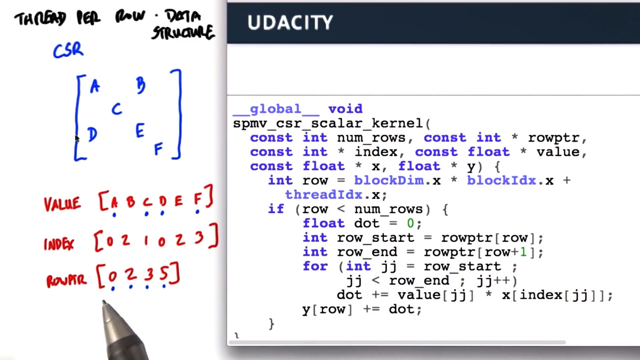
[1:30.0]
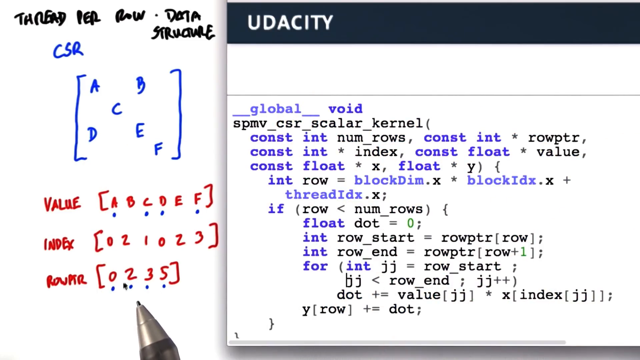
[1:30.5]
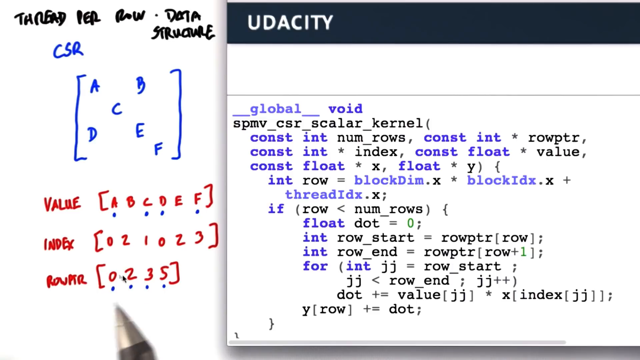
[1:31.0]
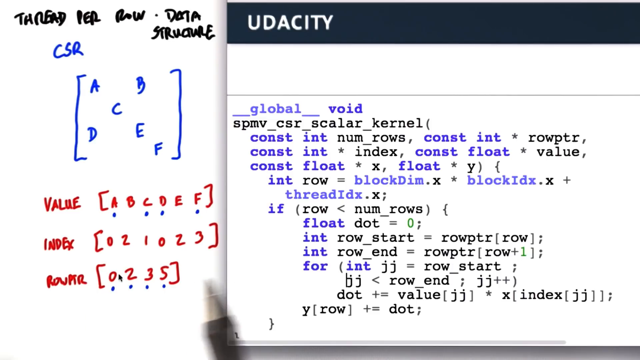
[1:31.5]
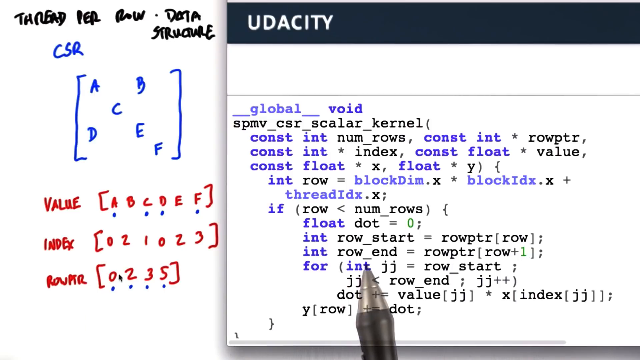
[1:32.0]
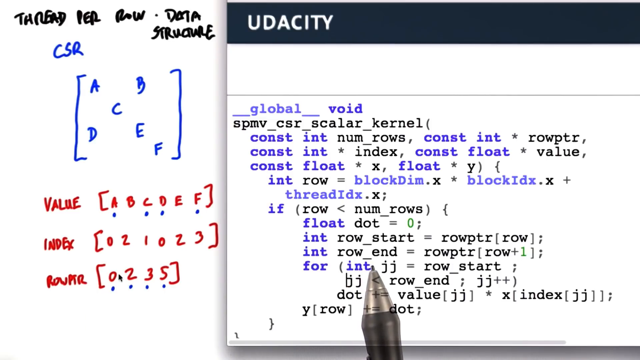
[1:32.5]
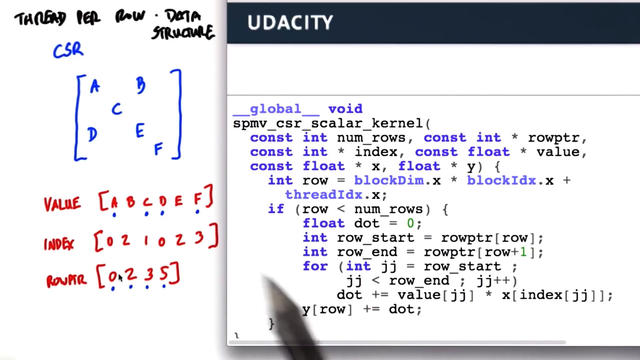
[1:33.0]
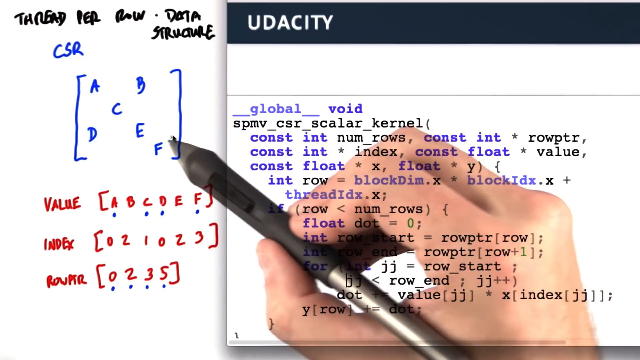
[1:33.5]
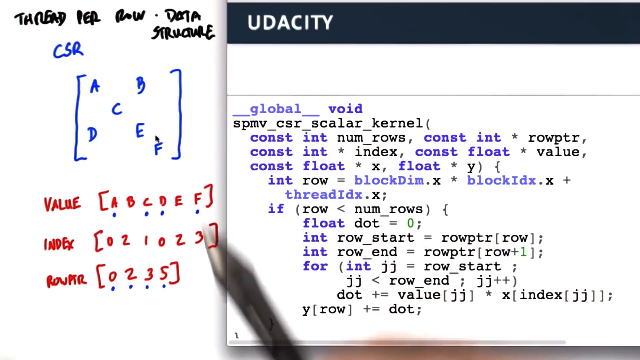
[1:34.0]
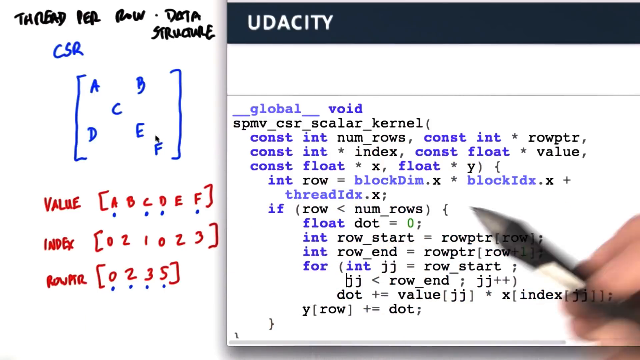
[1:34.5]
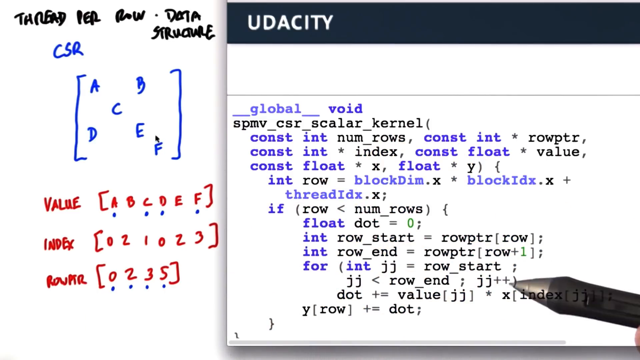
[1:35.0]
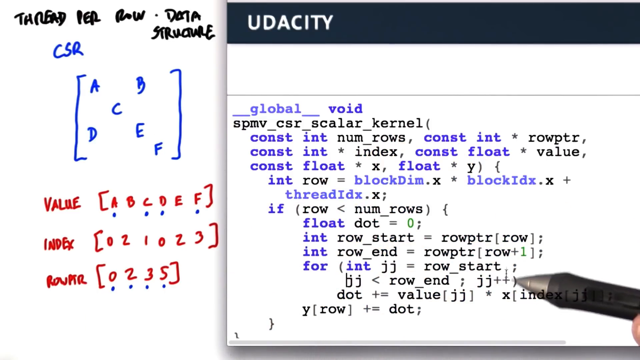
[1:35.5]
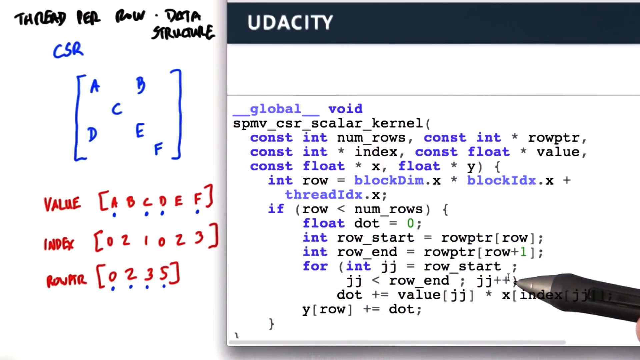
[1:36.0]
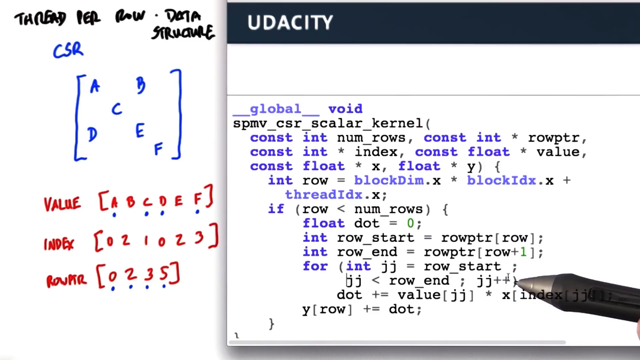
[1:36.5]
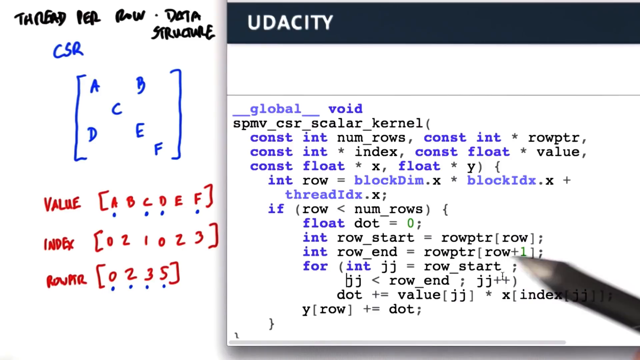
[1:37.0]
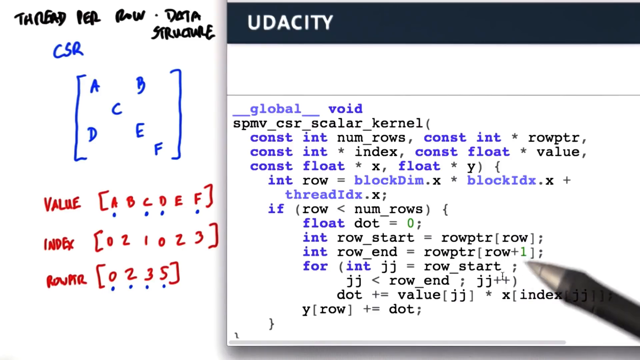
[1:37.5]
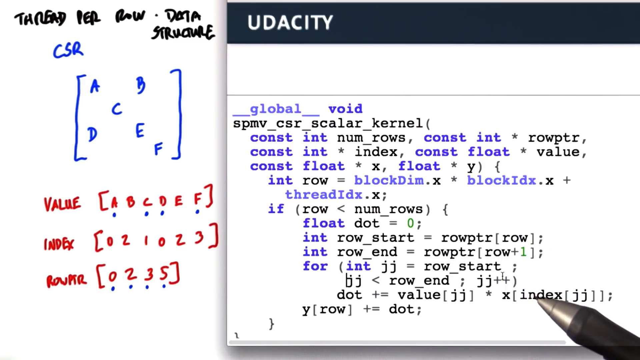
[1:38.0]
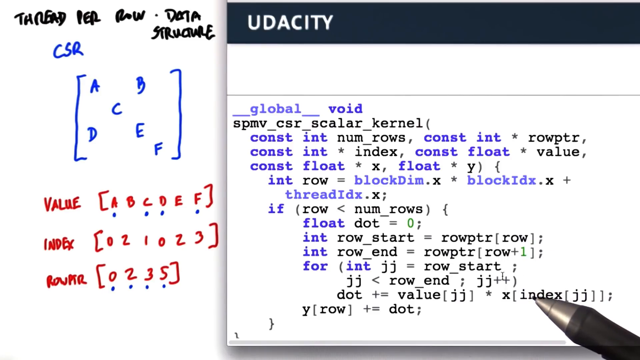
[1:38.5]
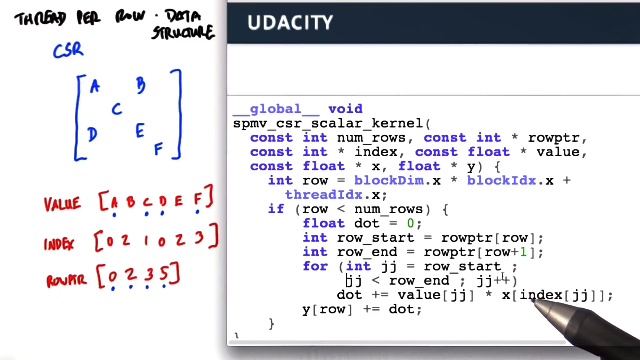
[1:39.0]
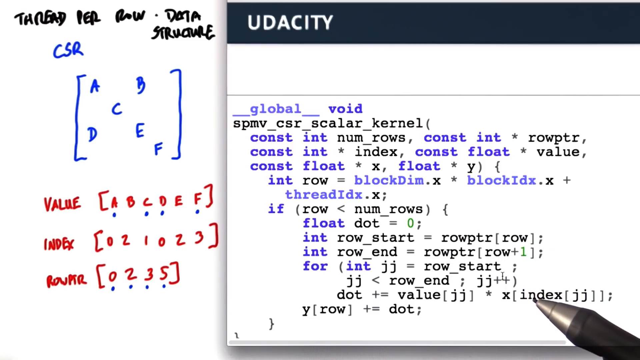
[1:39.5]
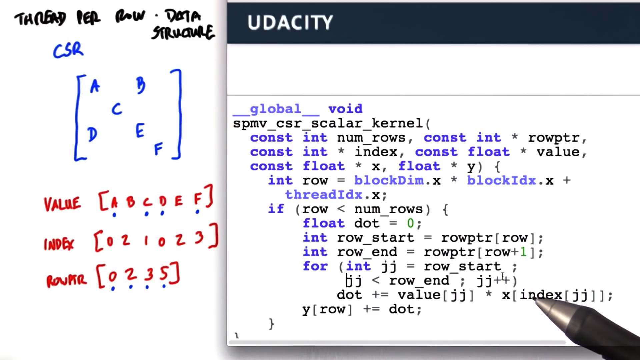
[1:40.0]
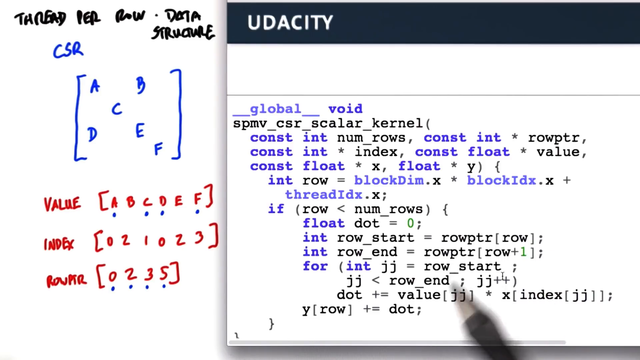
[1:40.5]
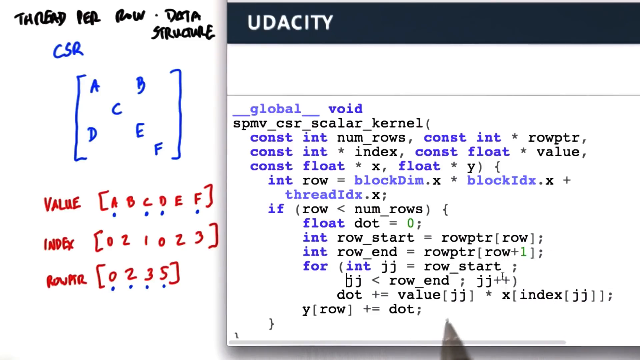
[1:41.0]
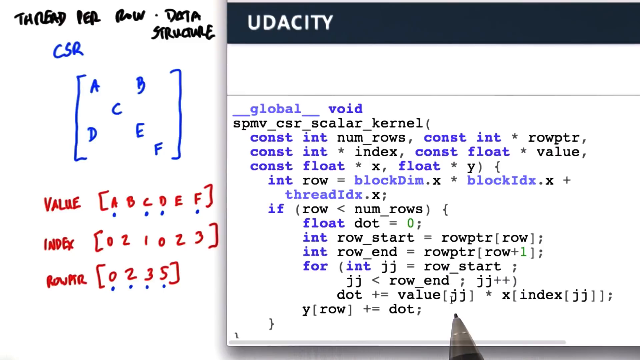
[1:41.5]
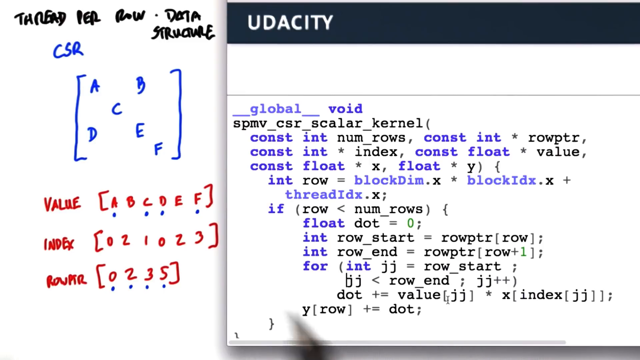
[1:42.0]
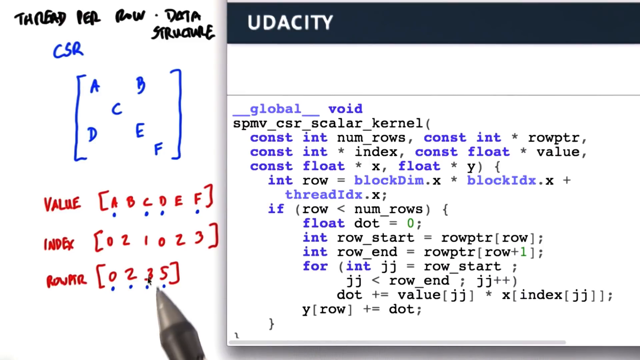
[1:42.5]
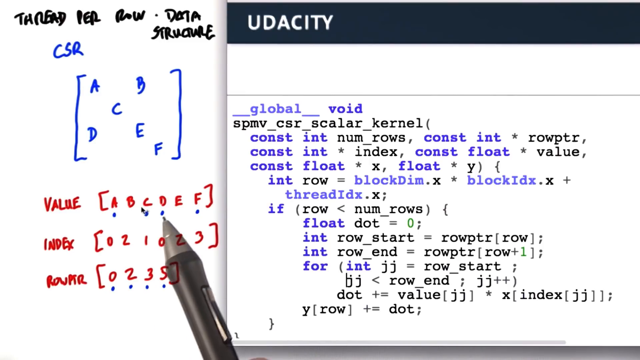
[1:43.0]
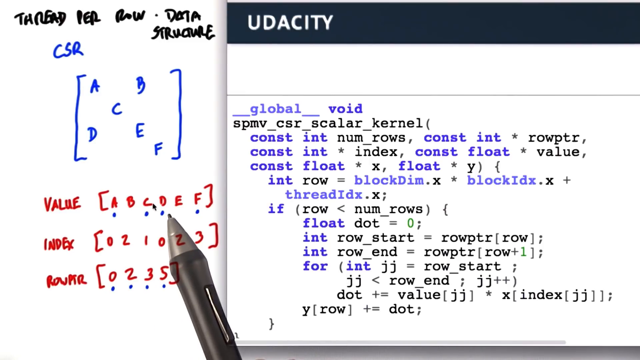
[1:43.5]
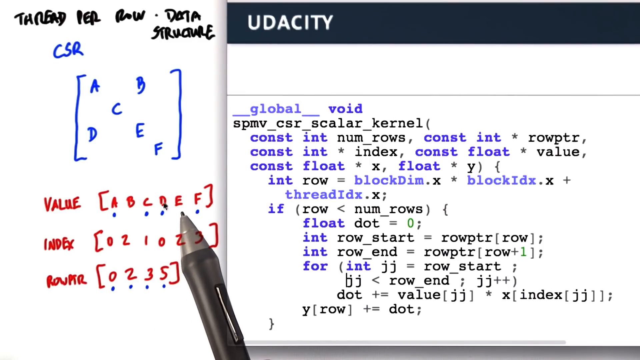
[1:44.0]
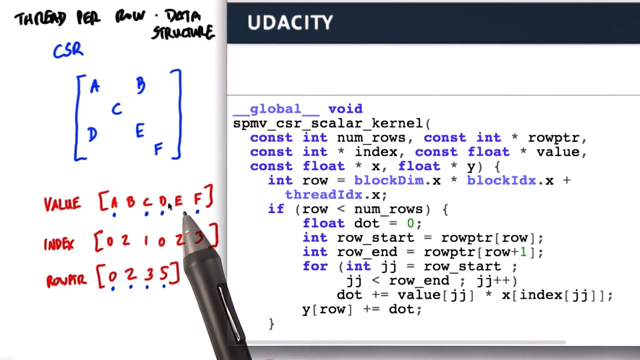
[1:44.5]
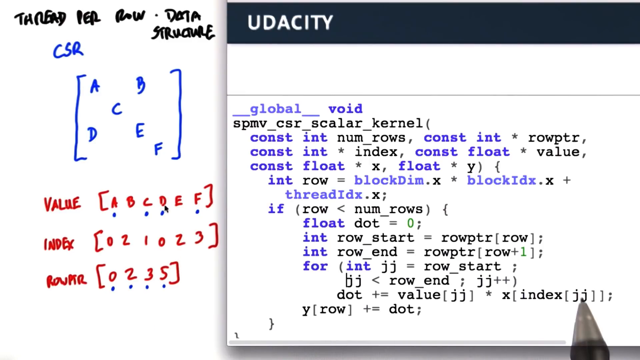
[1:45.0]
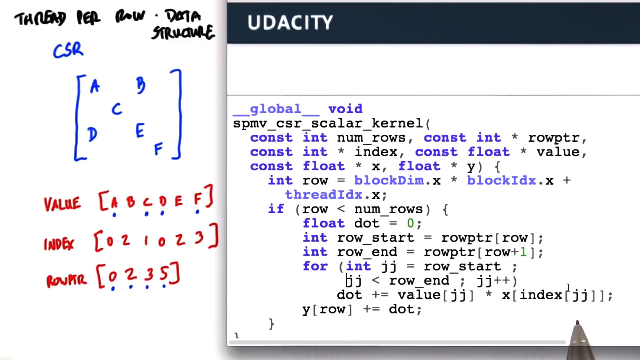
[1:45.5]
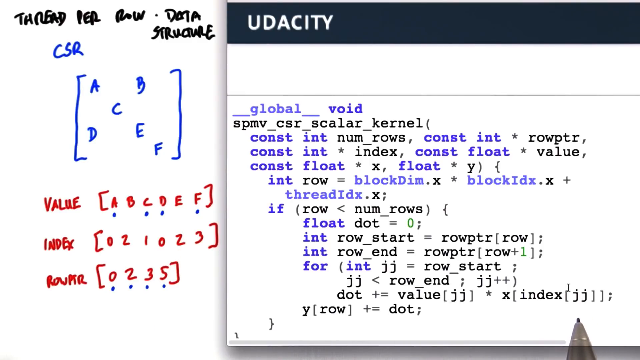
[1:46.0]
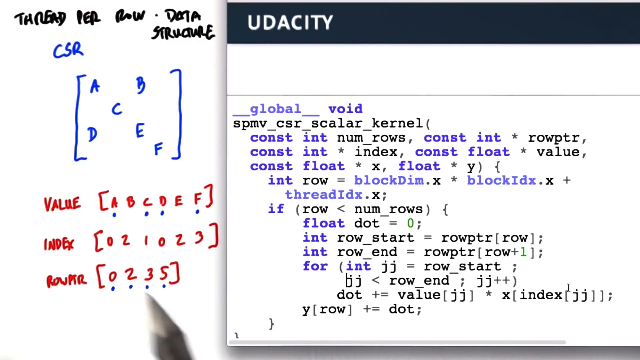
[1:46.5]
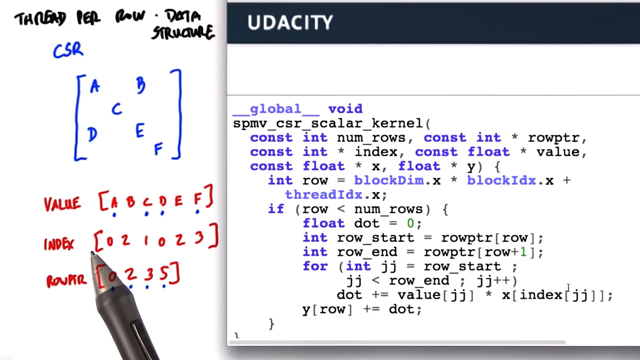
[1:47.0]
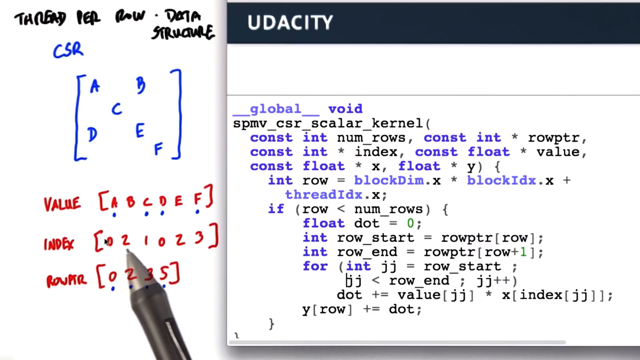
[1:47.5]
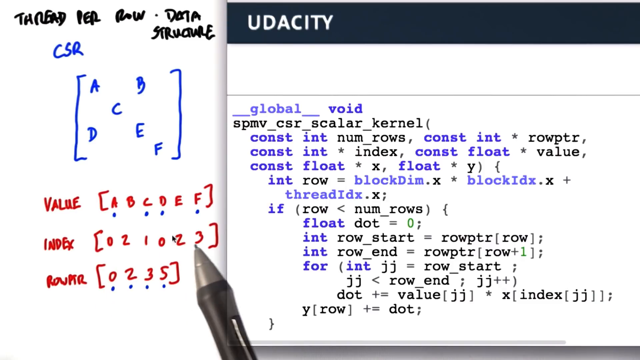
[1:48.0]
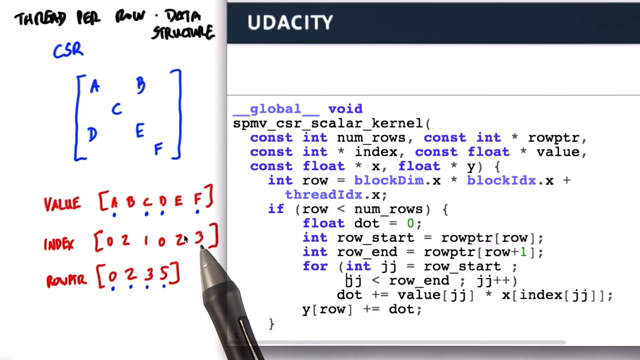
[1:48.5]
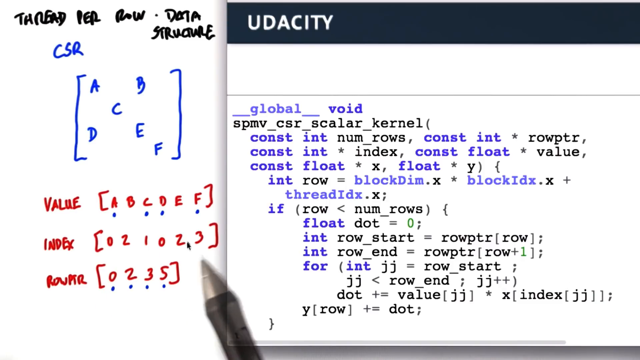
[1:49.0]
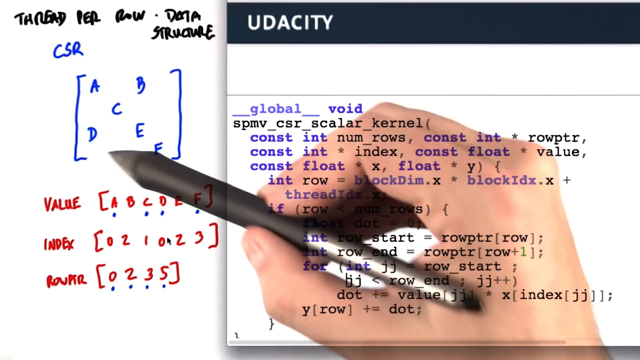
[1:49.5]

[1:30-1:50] The same code is on the right two-thirds of the screen: the Udacity code, presumably JavaScript, with a blue bar with Udacity at the top and the code below a line. On the other side of the screen is the same thread per row data structure as before. The tip of the pen is barely visible down in the lower left, pointing to the number 2 on the bottom row. It then moves completely over to the left side, then to mid-screen of the code near the bottom, around the fourth row from the bottom. It moves left almost all the way, then back toward the right side, about five rows up, pointing at one of the rows there, and then goes up and down rapidly as he illustrates his point with the pen tip. The pen moves somewhat wildly, three or four rows down and three or four rows up, three or four times in succession, until it lands around the third row from the bottom. It makes a loop in the air over some of the code and comes down to rest at the base of the display.